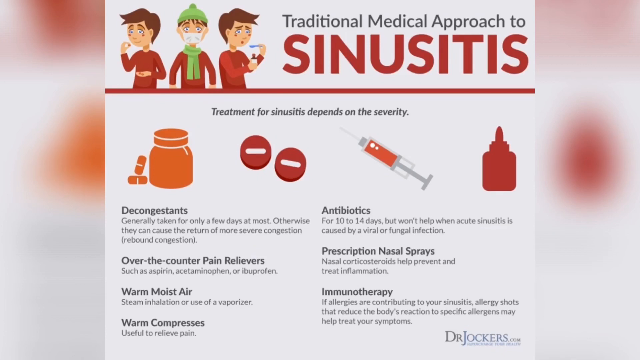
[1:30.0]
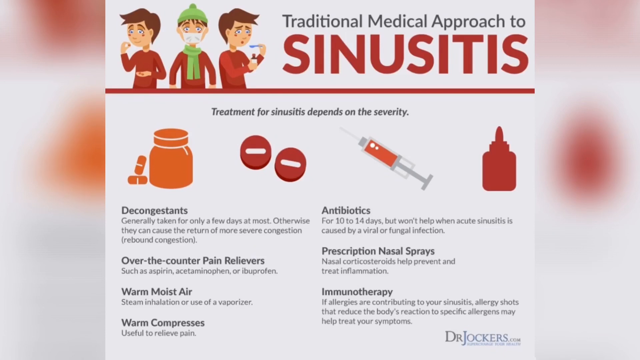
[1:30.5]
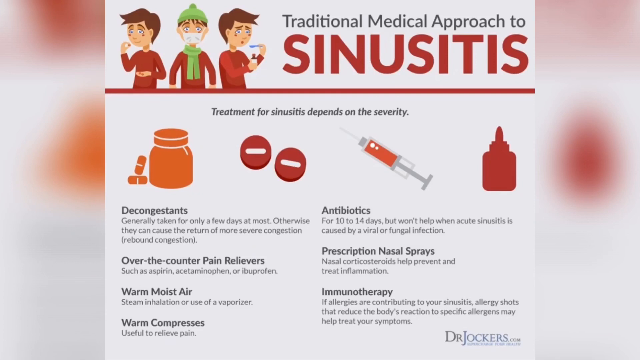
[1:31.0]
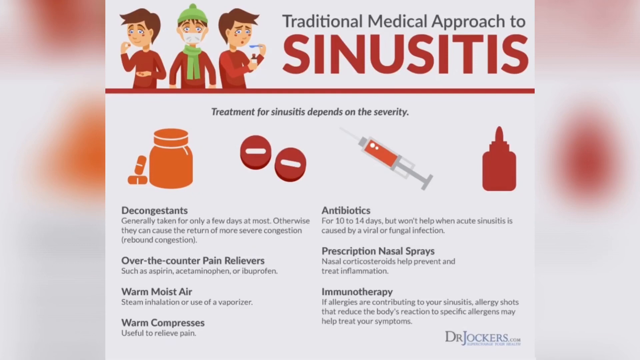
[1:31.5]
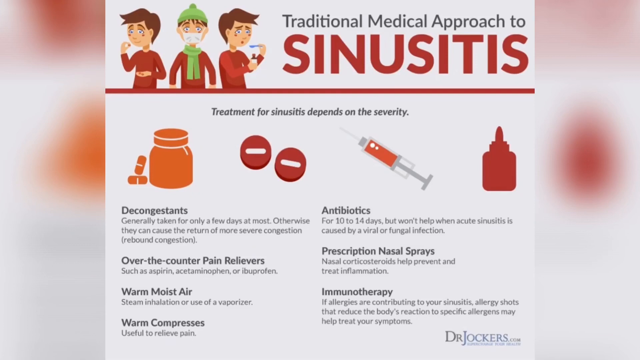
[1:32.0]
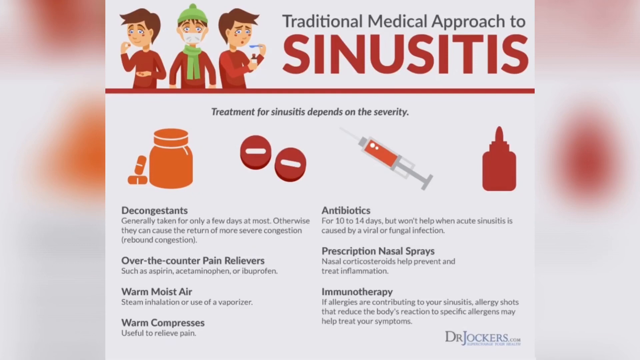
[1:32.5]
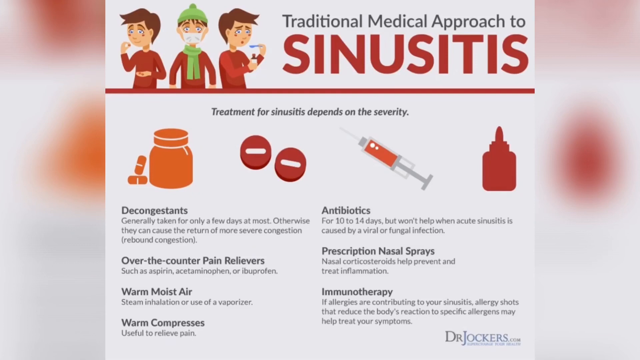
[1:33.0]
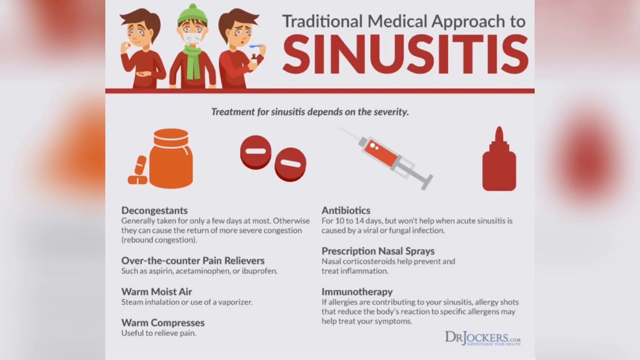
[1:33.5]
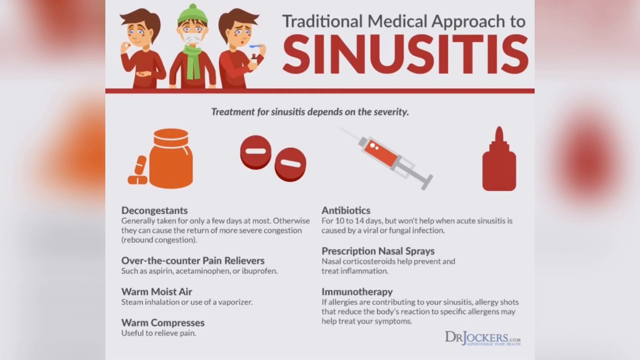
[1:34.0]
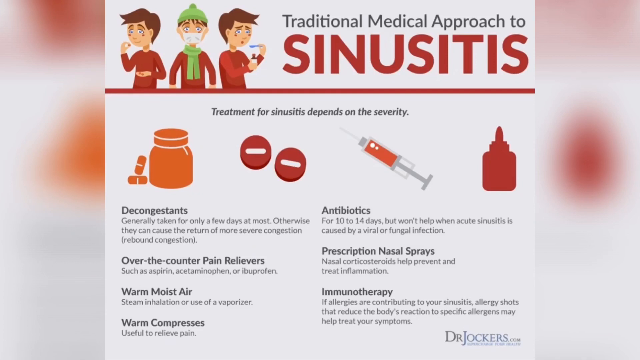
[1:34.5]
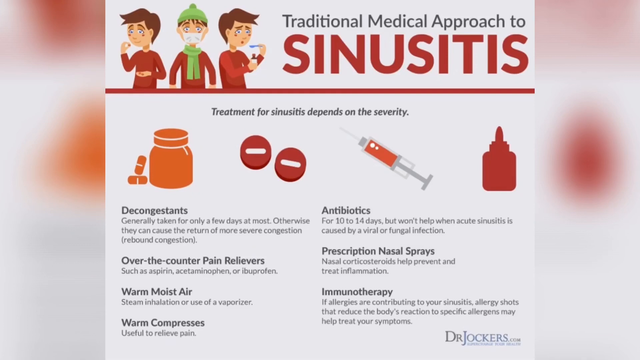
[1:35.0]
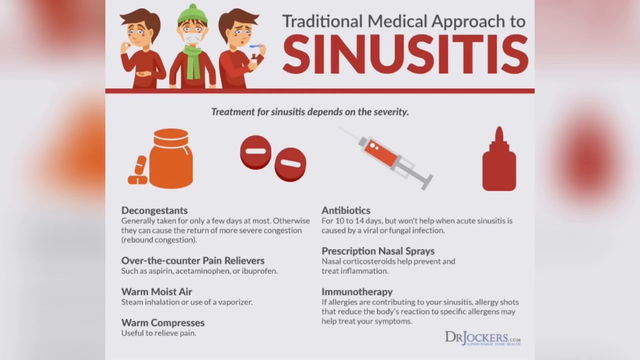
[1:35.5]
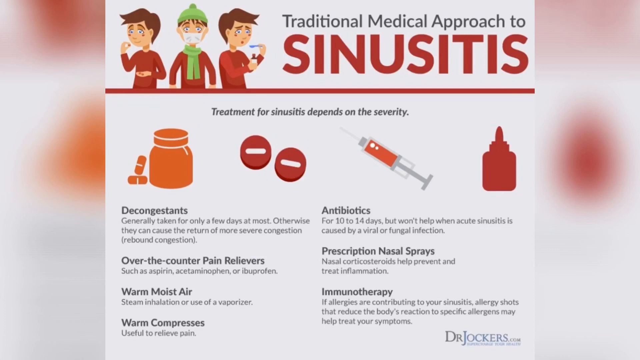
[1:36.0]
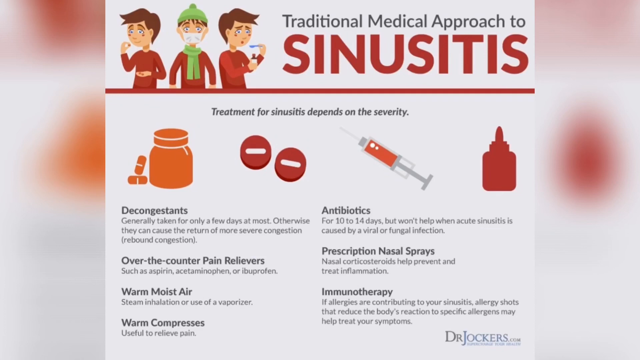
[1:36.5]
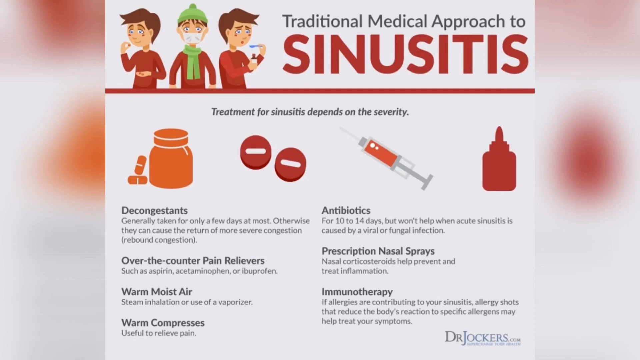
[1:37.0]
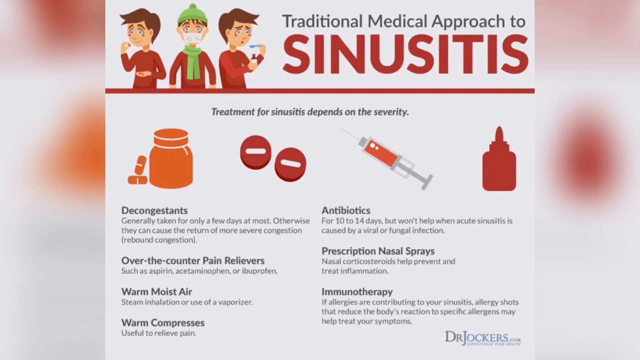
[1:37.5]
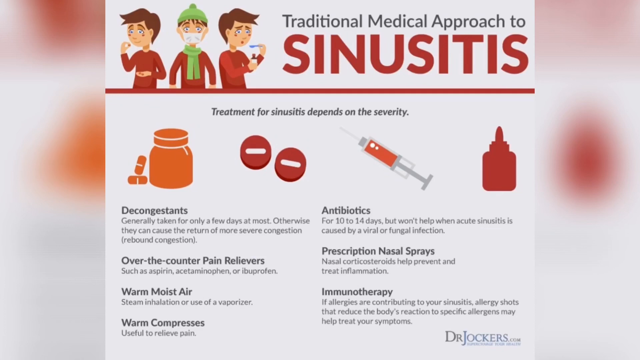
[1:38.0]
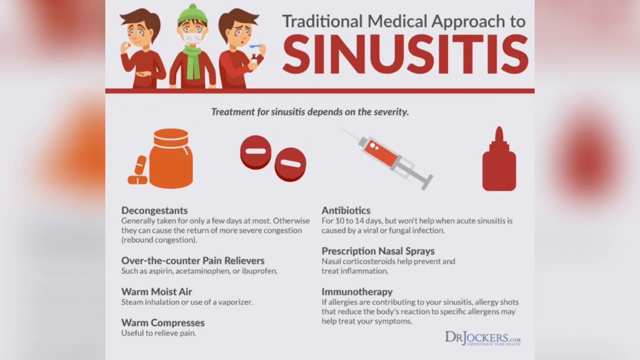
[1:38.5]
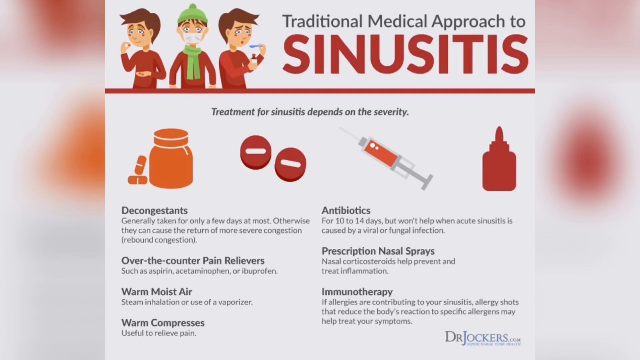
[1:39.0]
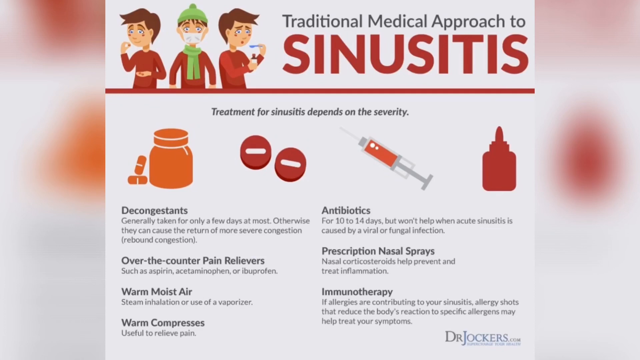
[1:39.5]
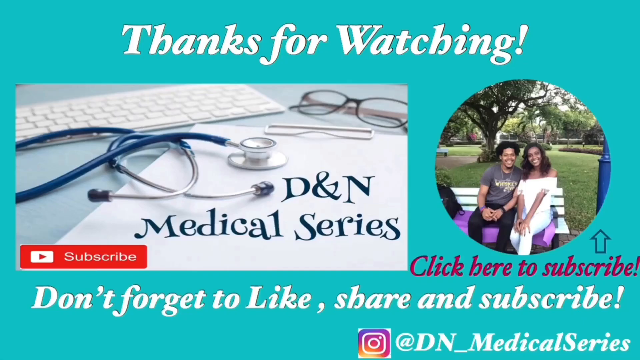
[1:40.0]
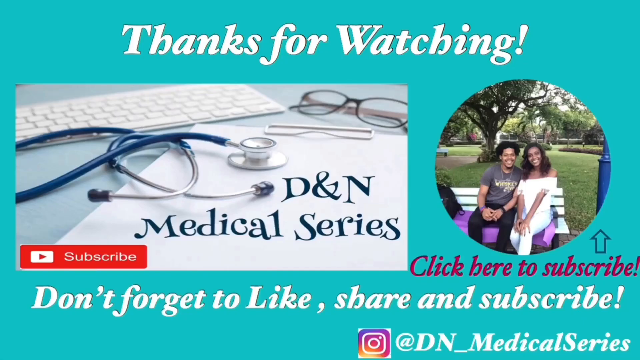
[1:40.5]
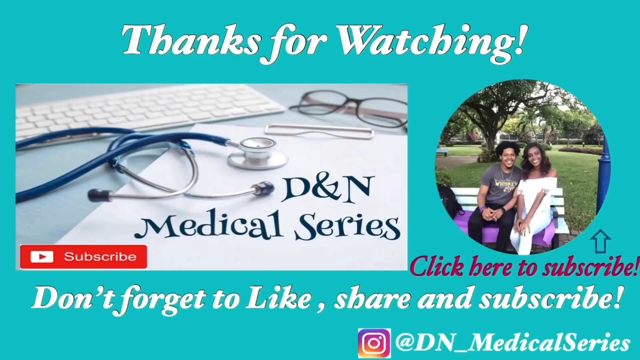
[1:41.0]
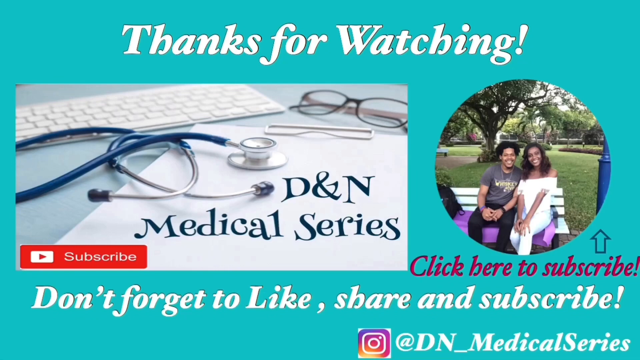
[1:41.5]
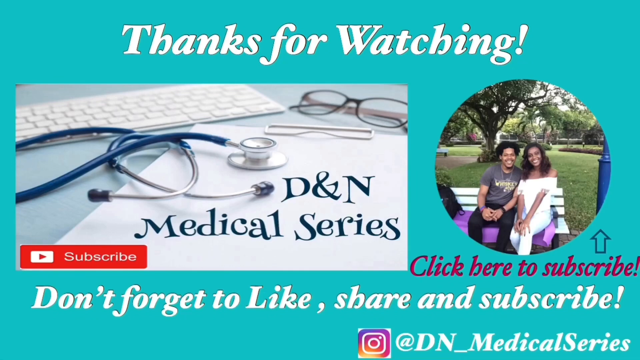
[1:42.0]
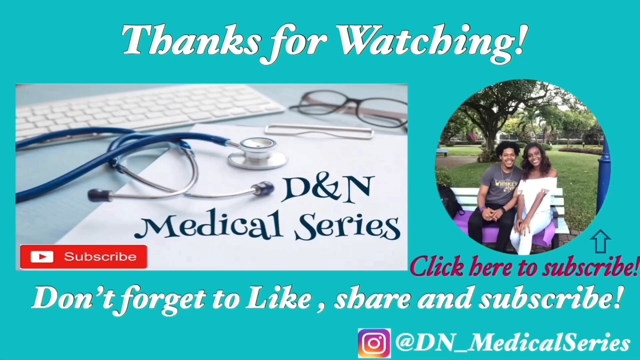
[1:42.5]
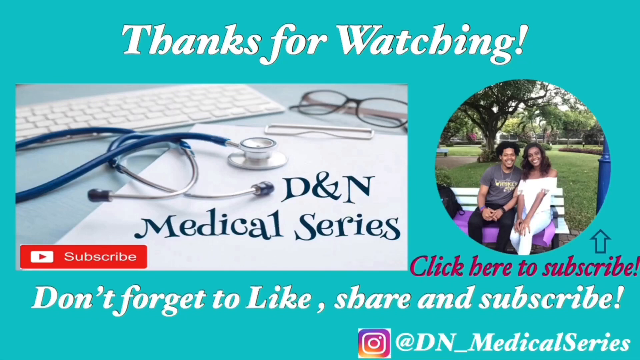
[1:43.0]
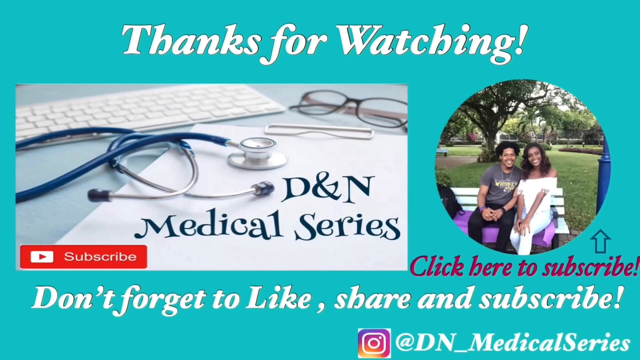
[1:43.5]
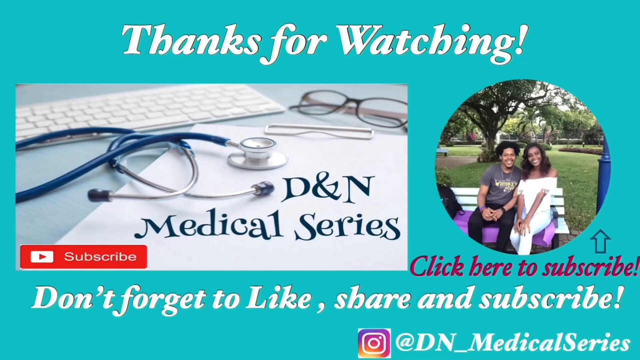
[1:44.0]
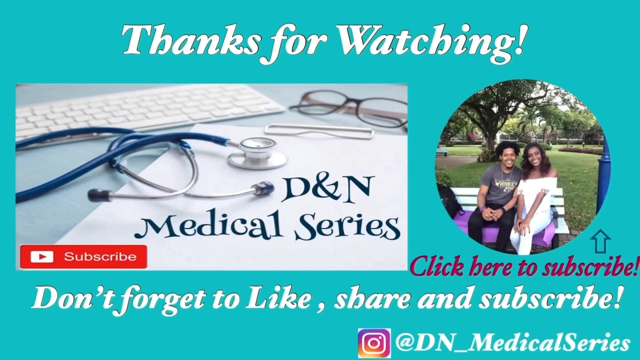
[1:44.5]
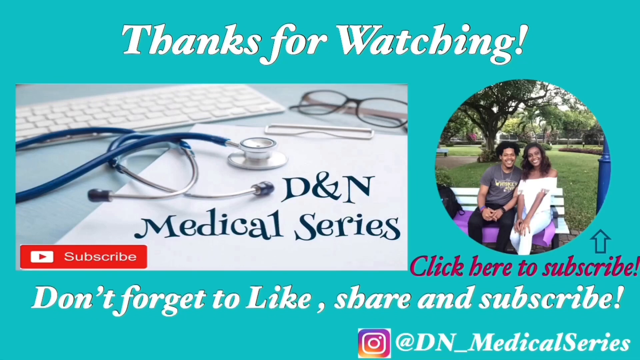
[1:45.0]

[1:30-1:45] The slideshow slide on the traditional medical approach to sinusitis shows three versions of the same sick person in the upper left-hand corner. They wear a red shirt, have brown hair, and look sick. The character in the middle has a white face mask, a green beanie on their head, and a green scarf. The character on the left is taking a pill, and the character on the right is taking liquid medicine. Seven approaches to sinusitis are listed below, each described with a short sentence: decongestants, over-the-counter pain relievers, warm moist air, warm compresses, antibiotics, prescription nasal spray, and immunotherapy. At the end, a slide says "thanks for watching". It has a picture of two people, a female and a male, sitting on a bench, with the male leaning towards the female and a tree in the background. Below that it says "click here to subscribe". At the bottom it says "don't forget to like, share, and subscribe", and on the left side it says "D&N Medical Series".